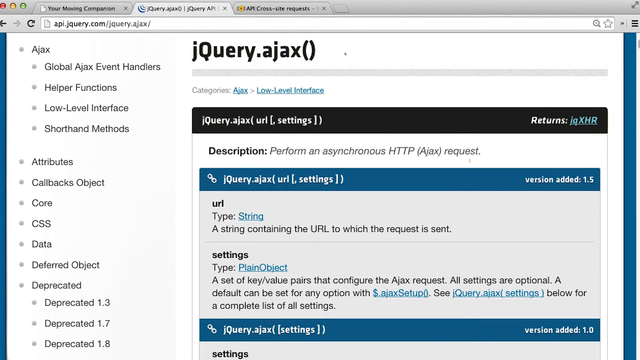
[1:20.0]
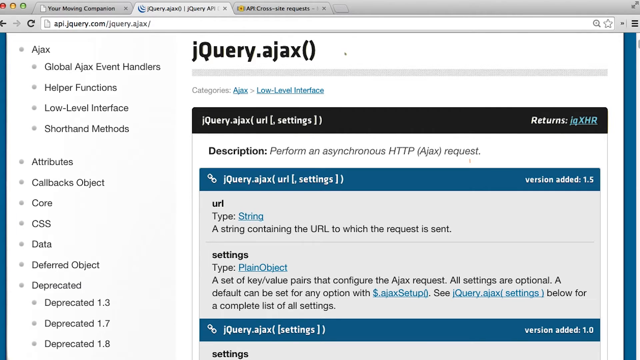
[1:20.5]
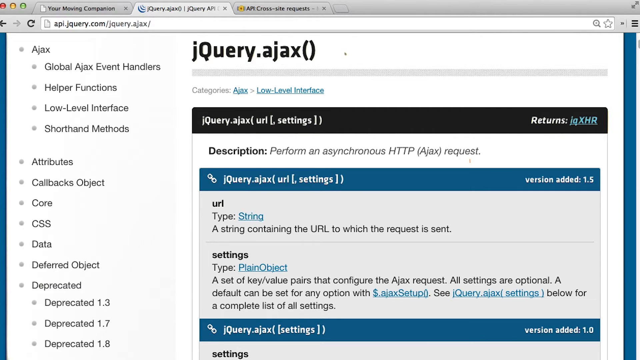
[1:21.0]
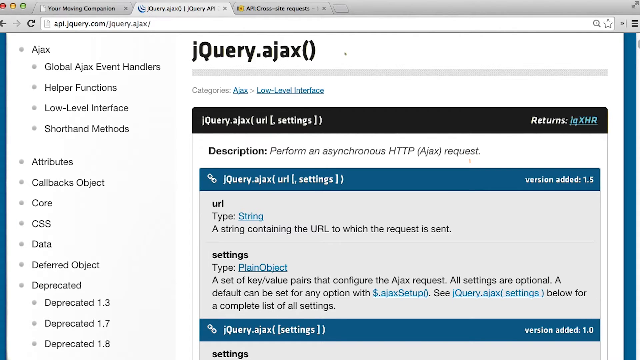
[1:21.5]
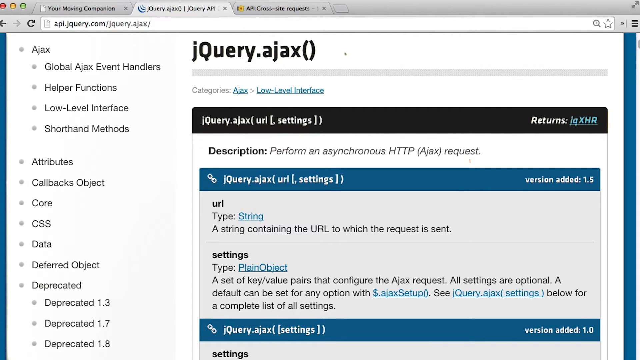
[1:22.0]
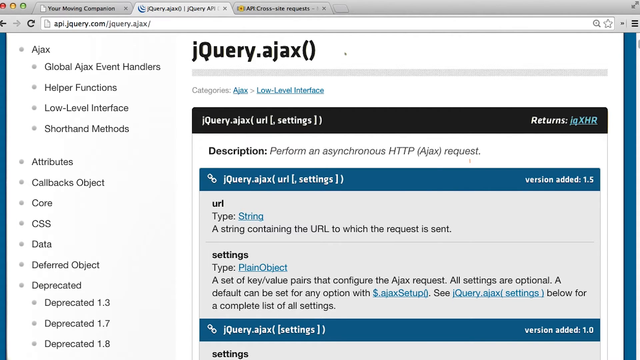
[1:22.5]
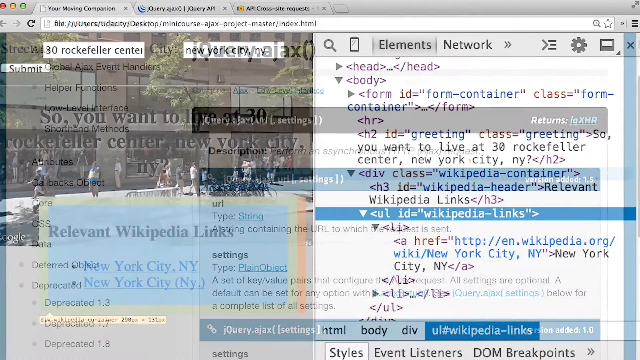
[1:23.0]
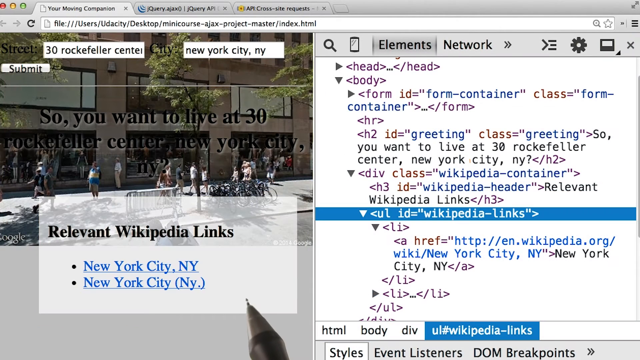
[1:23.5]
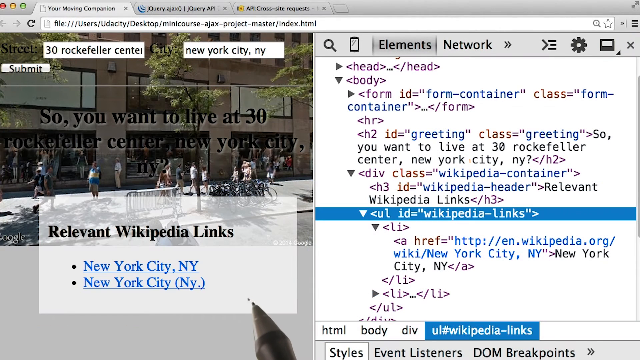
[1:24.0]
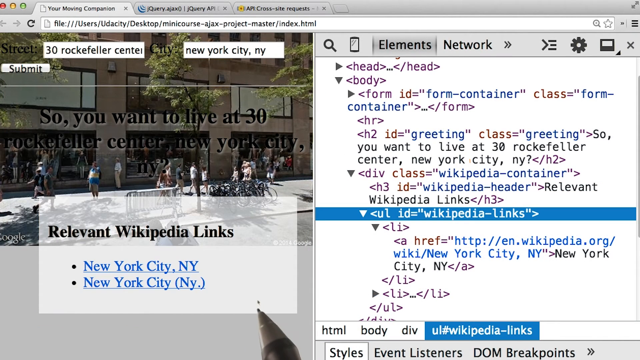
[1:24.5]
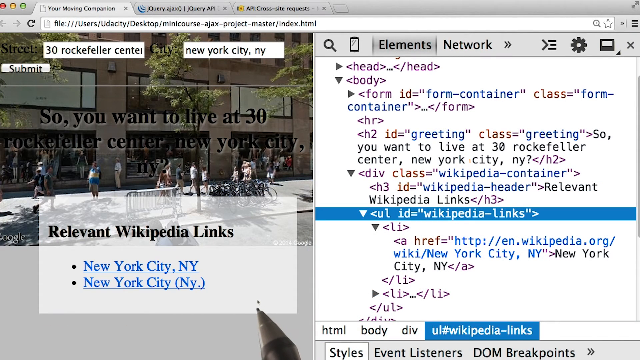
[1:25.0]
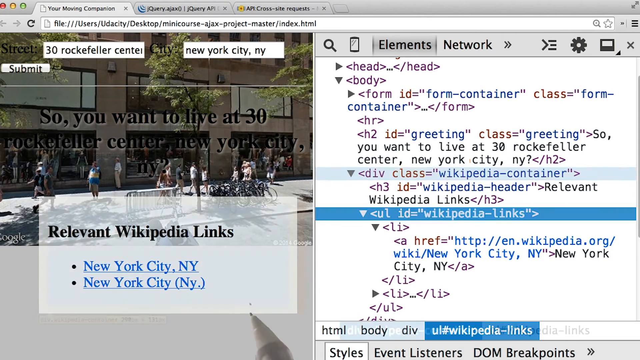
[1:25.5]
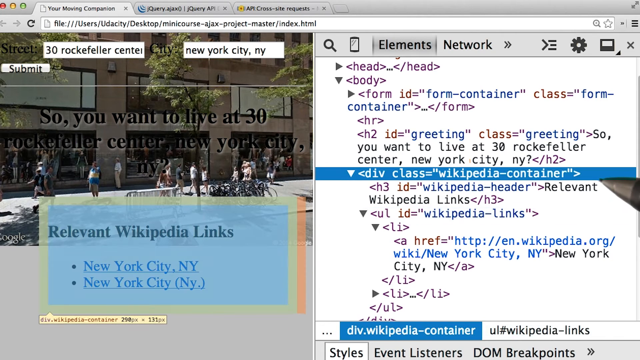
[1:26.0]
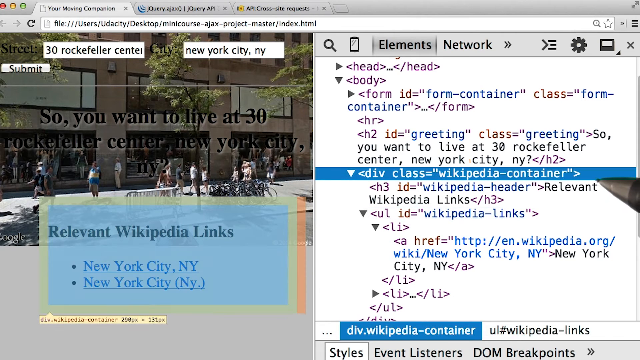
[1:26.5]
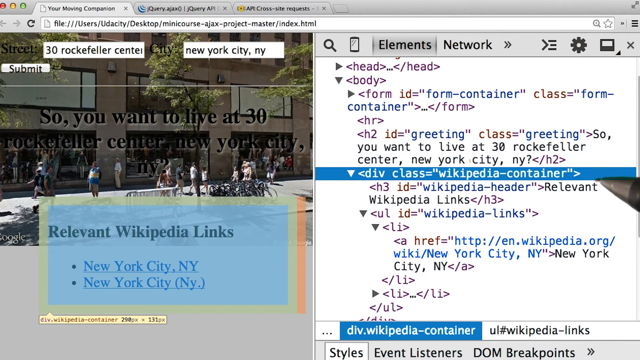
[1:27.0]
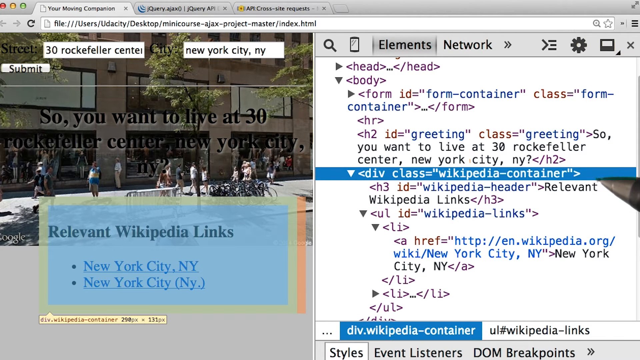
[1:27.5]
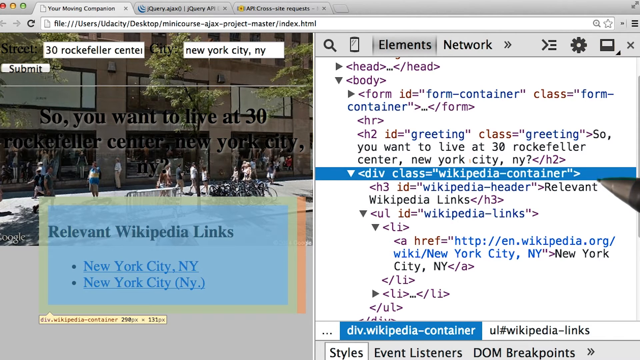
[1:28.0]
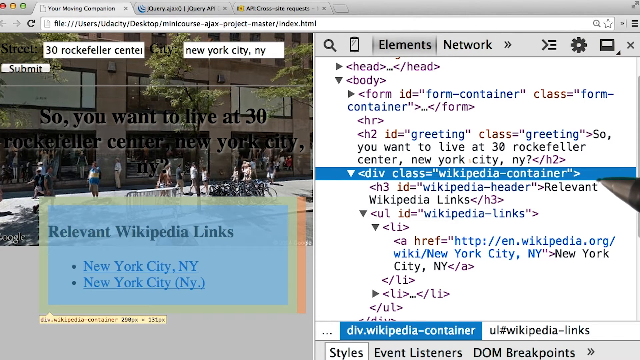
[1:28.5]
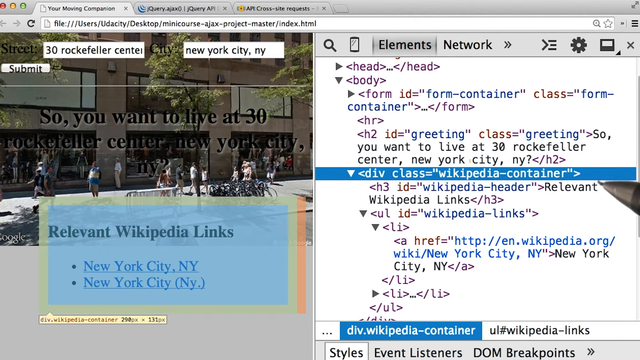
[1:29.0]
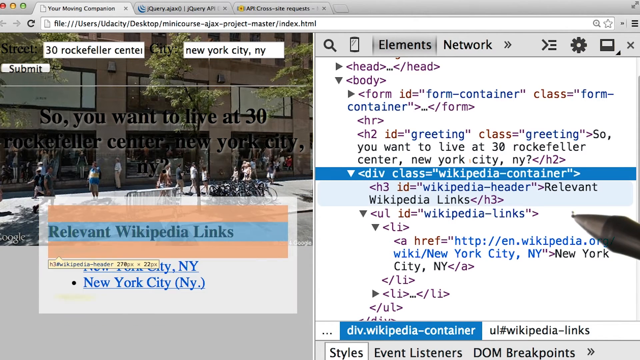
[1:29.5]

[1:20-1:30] A page reads "jQuery.ajax," then another page appears reading "so you want to live at 30 Rockefeller Center, New York," with a Wikipedia link on New York City. One side shows the building: a tall building in daytime with people walking by outside. The other side has various text, with "Wikipedia links" highlighted in the middle of the information.